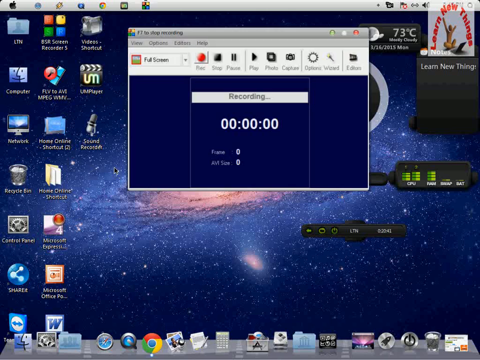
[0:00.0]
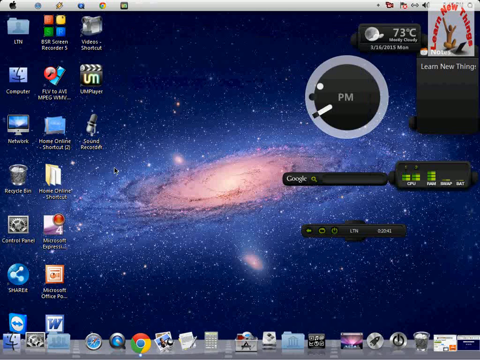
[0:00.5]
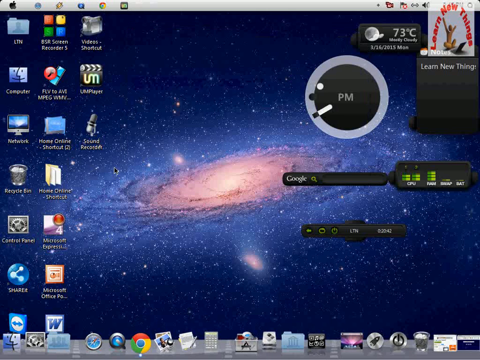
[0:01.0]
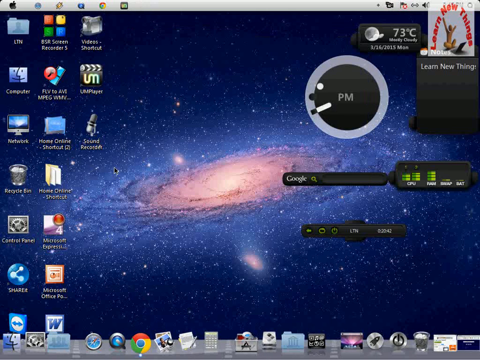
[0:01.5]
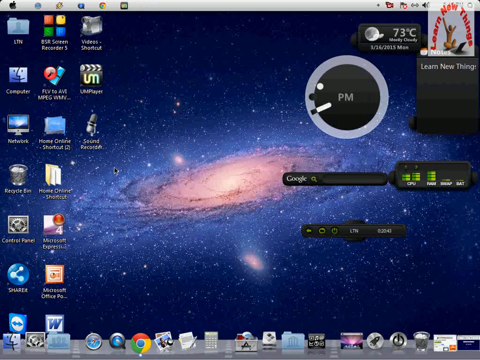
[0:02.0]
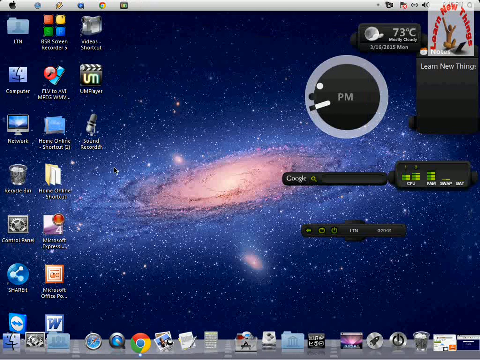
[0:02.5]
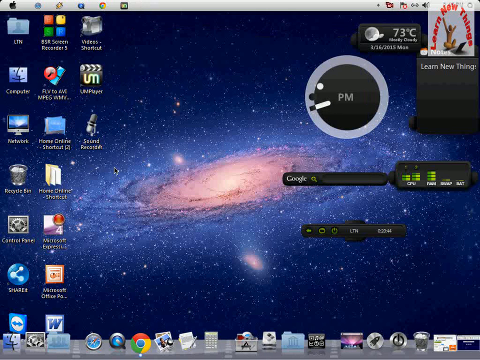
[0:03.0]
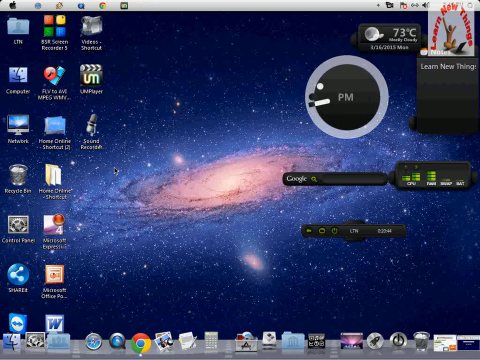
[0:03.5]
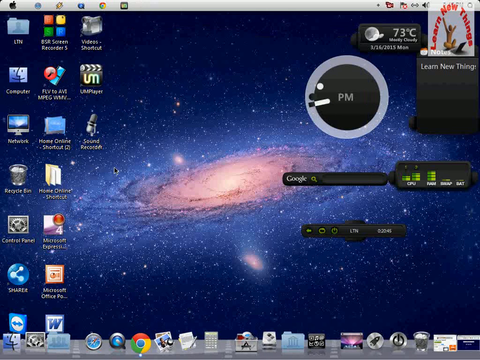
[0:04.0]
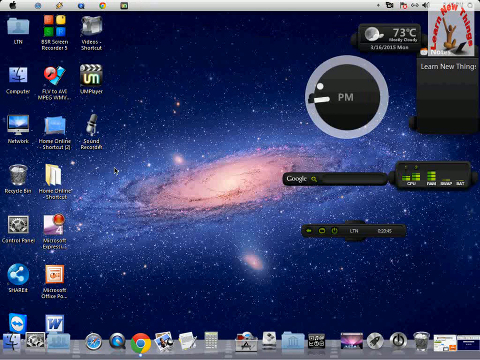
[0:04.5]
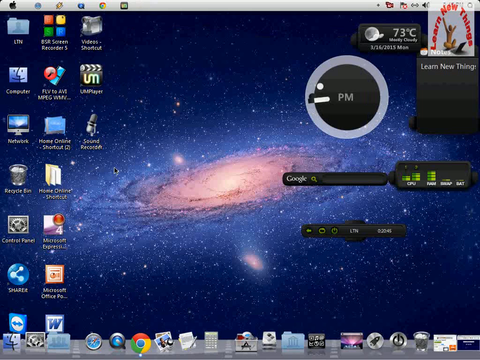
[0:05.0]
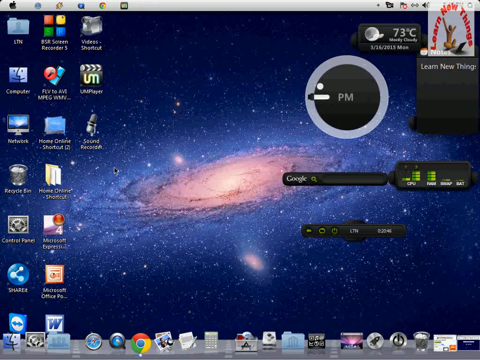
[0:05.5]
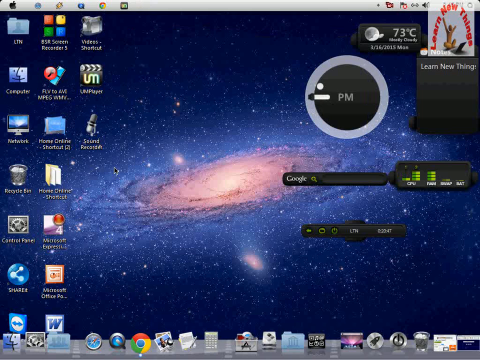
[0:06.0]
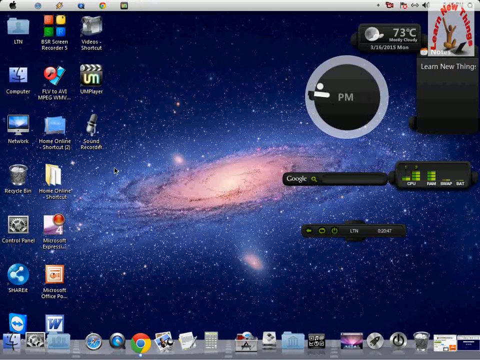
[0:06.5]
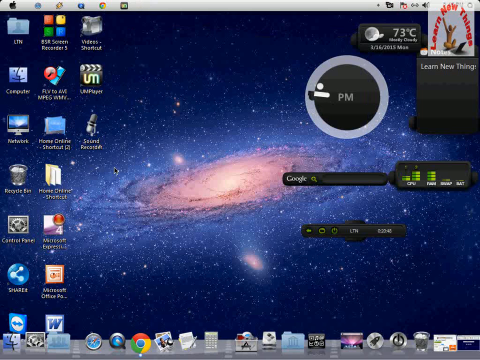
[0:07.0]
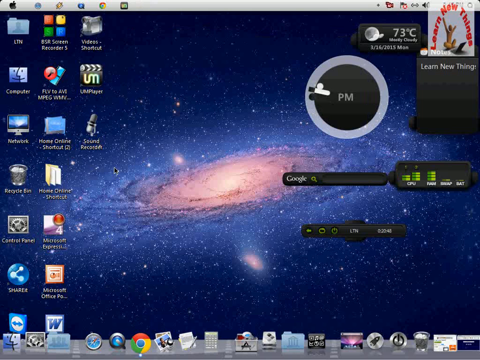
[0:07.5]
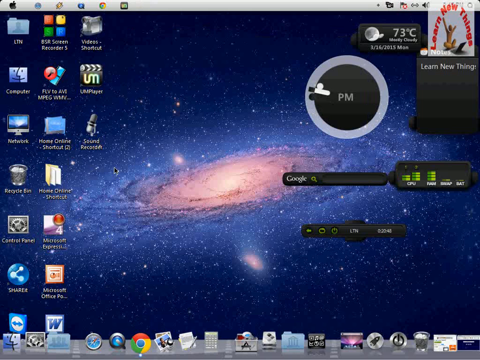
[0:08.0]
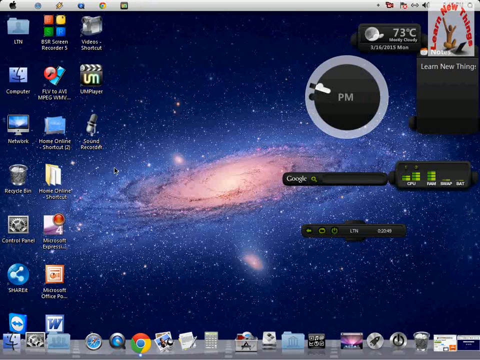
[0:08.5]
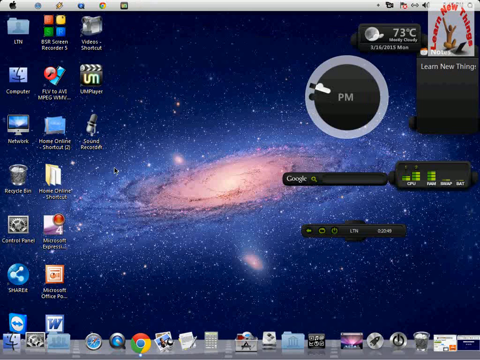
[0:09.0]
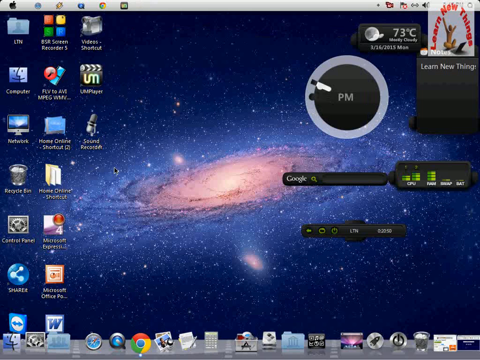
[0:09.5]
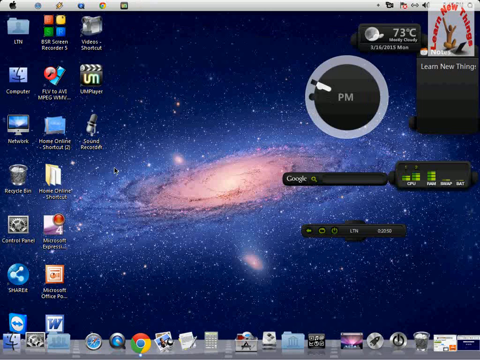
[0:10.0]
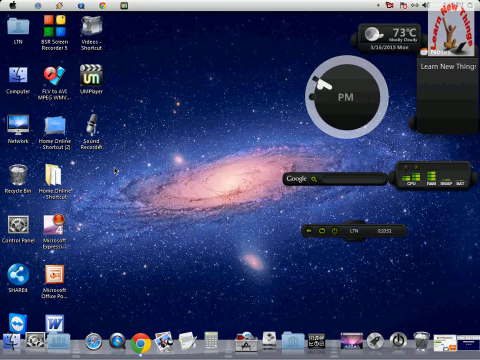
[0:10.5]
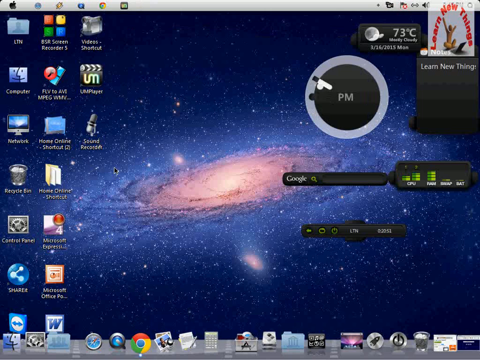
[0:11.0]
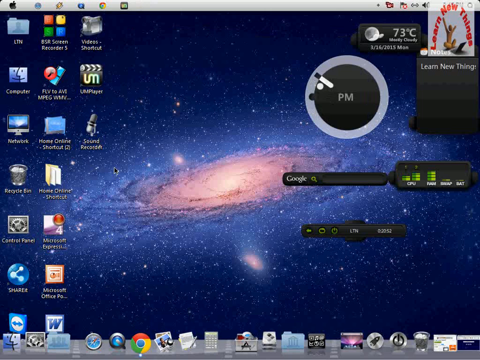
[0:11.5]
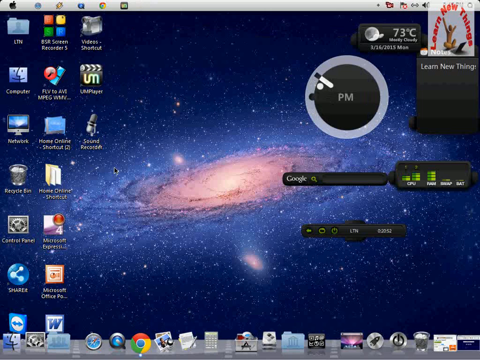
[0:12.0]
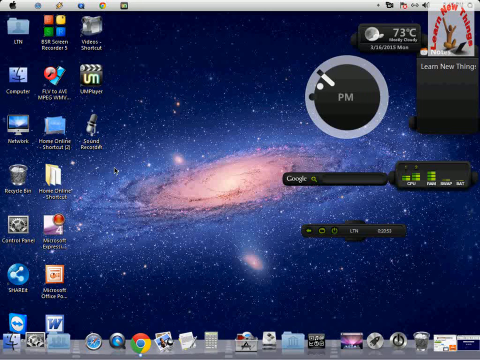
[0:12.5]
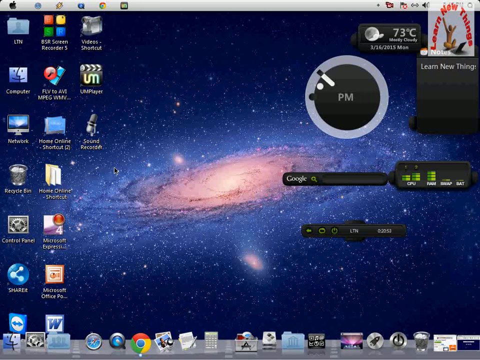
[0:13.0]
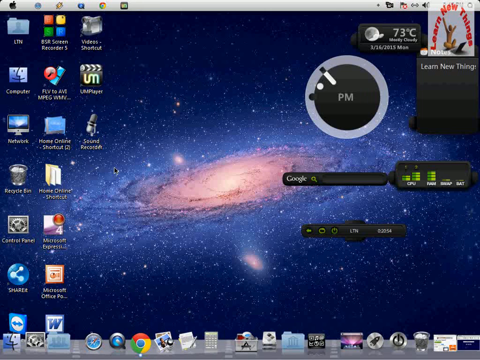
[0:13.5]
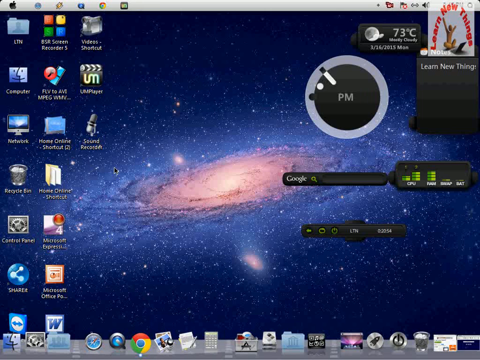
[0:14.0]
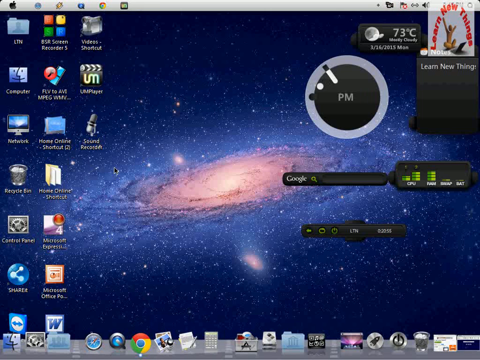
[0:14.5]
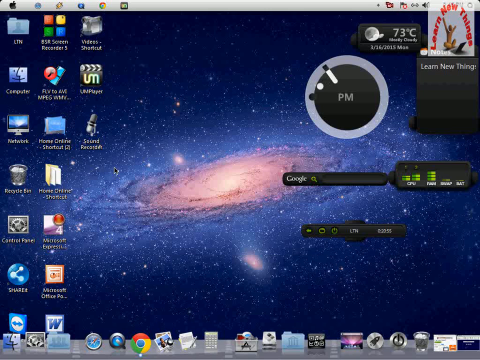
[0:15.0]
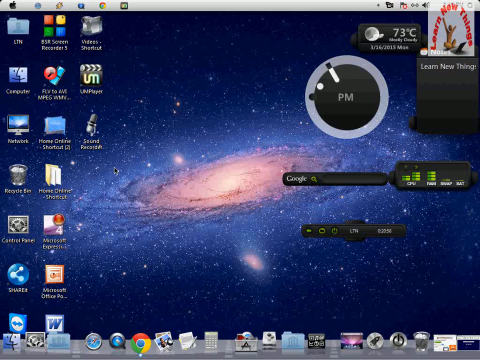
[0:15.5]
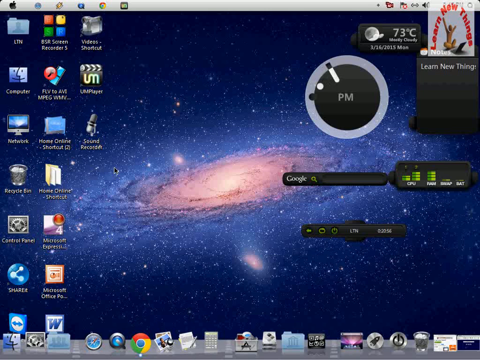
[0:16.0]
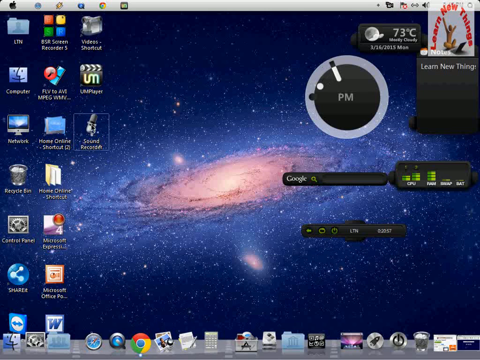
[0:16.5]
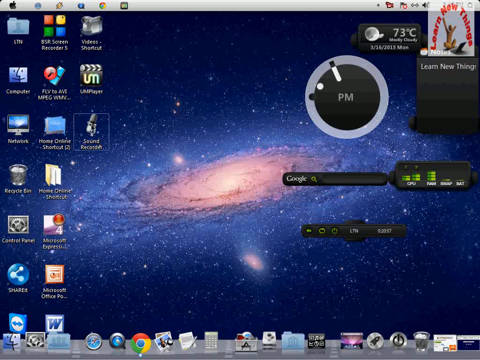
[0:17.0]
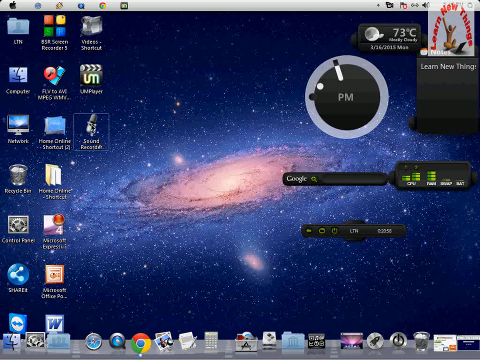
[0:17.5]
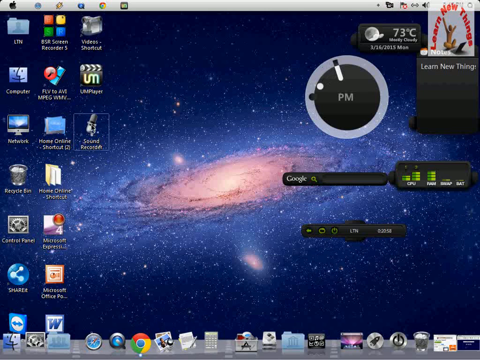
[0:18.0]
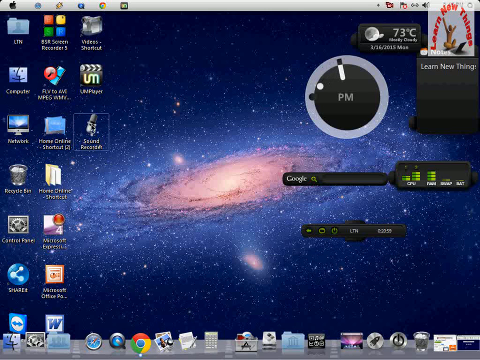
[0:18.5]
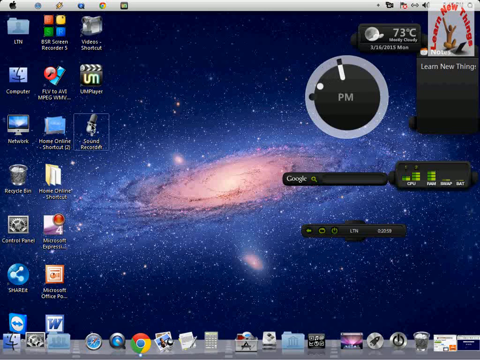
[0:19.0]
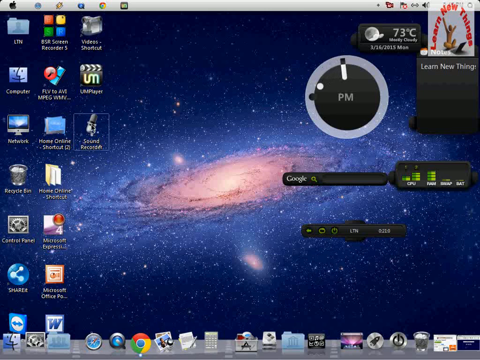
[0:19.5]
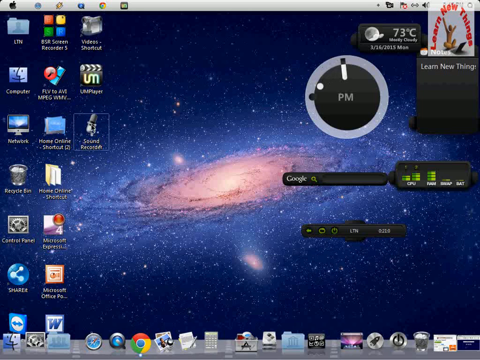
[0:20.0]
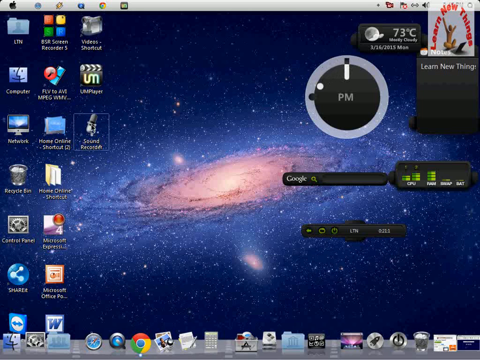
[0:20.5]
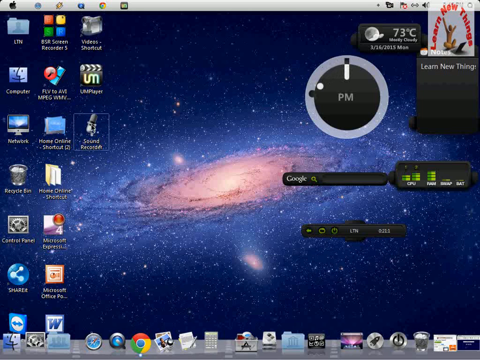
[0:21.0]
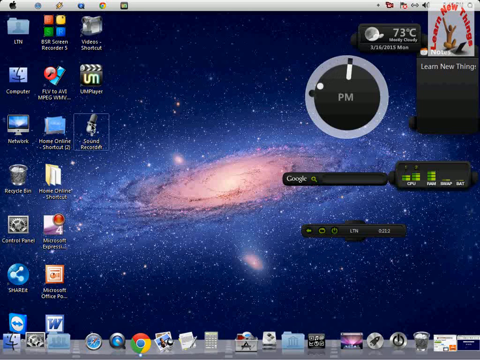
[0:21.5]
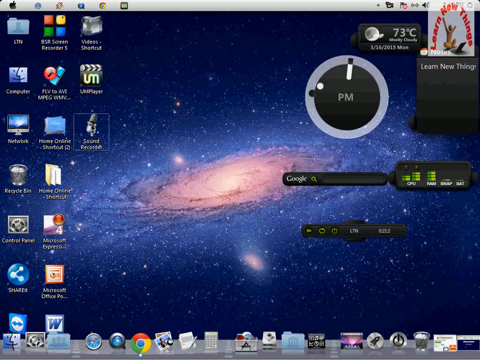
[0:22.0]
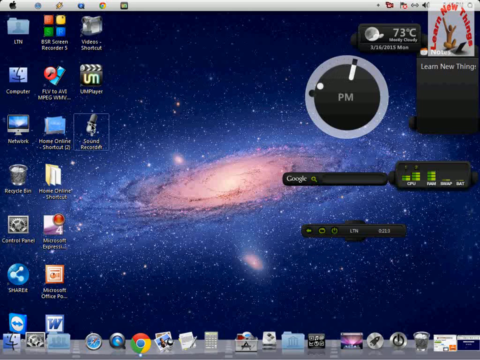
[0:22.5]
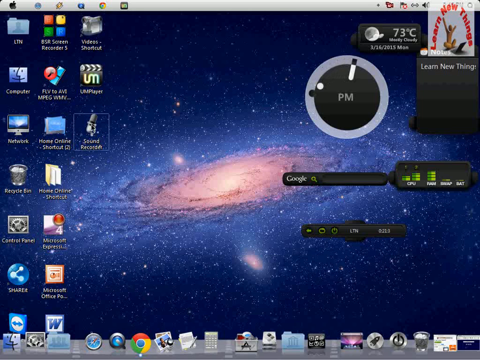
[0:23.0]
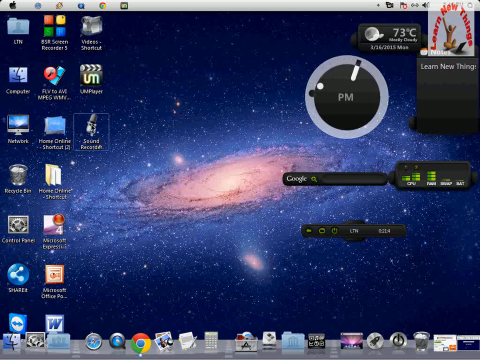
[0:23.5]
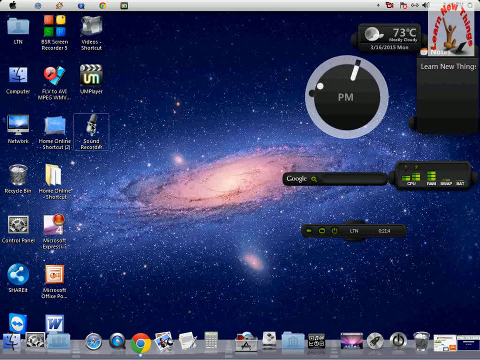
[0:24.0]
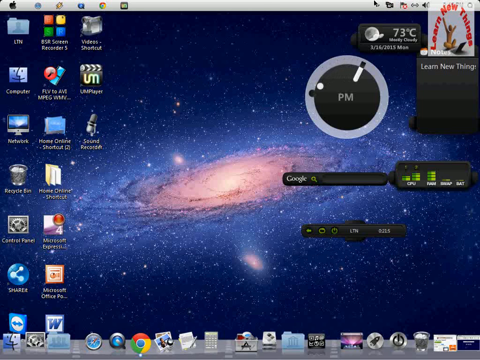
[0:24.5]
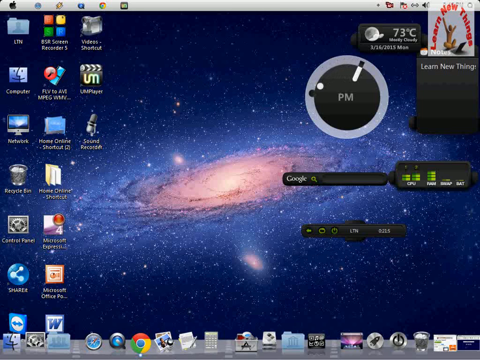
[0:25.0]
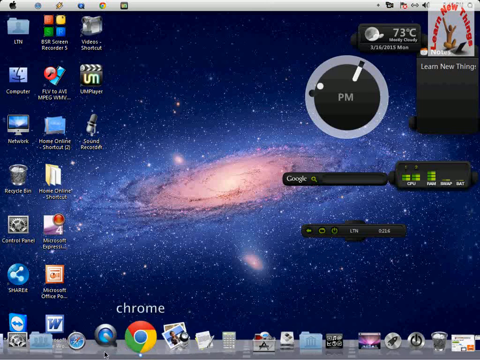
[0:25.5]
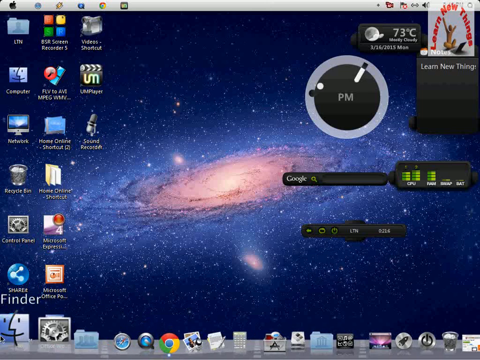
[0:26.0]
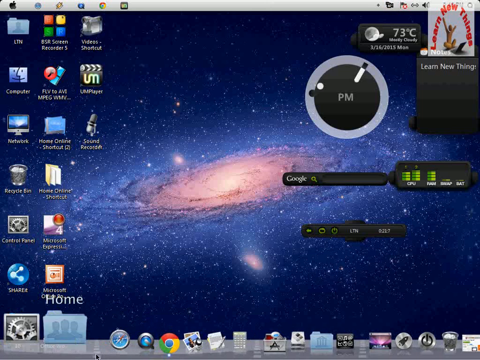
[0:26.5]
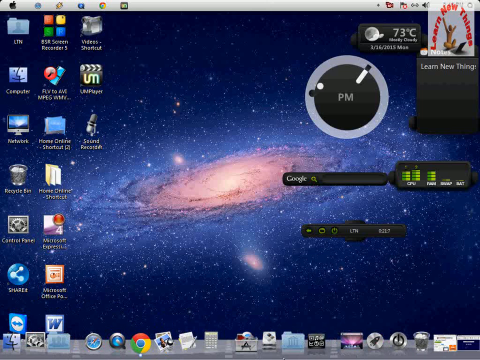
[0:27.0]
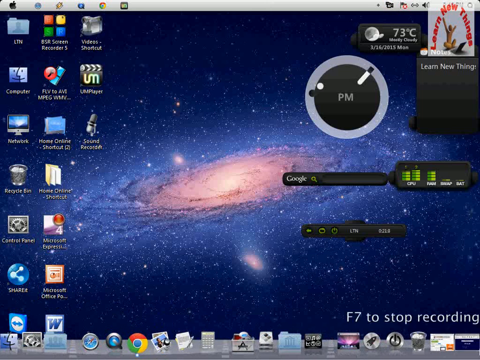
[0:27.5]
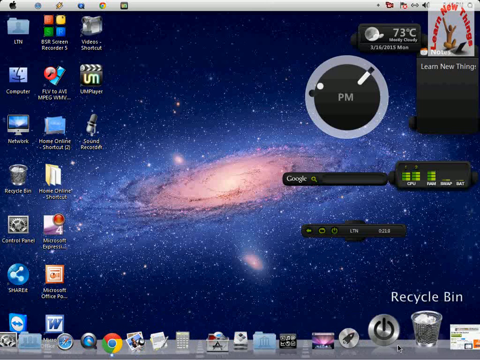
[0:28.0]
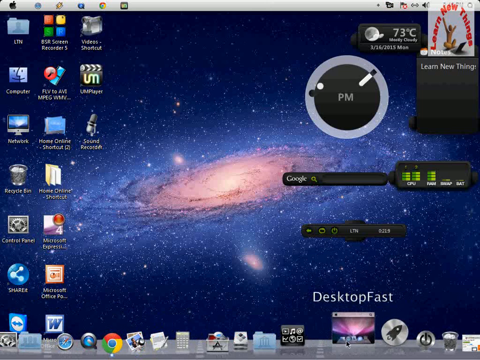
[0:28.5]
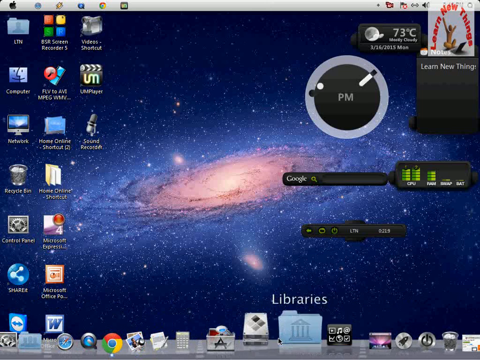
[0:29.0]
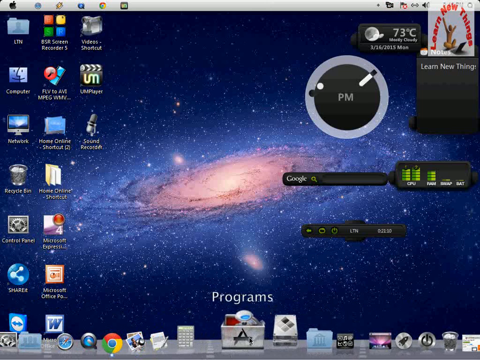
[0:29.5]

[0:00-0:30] The video shows someone's Mac desktop or laptop; the Apple logo in the upper left-hand corner is black. The image is blurry. A recording app is open, but its name is too blurry to read; there appear to be three or four words, possibly including "view" and maybe "options", and it looks like it could be full screen. There are a pause button, a stop button, a play button and other symbols, and the text "recording", with the recording counter starting at zero. "73 degrees" appears in the upper right-hand corner along with the time, shown like a running digital clock. At the bottom, the person looks through their apps, going back and forth between programs, apparently including Firefox.